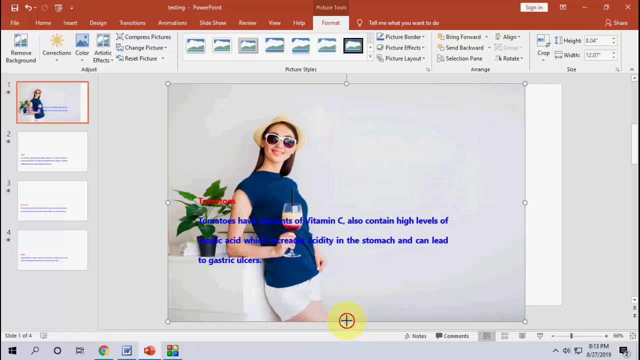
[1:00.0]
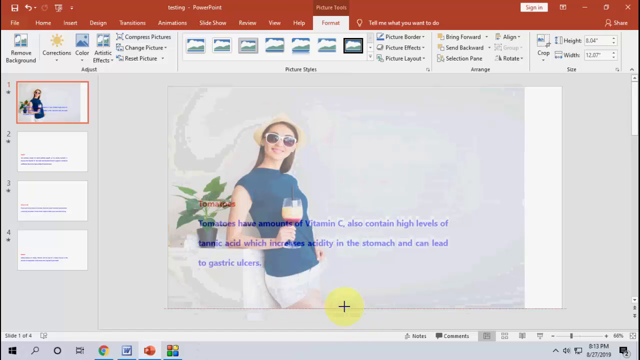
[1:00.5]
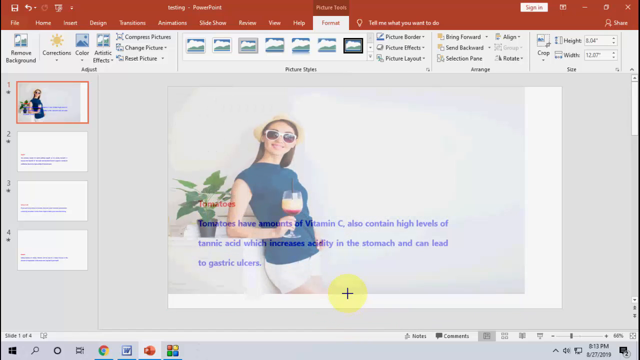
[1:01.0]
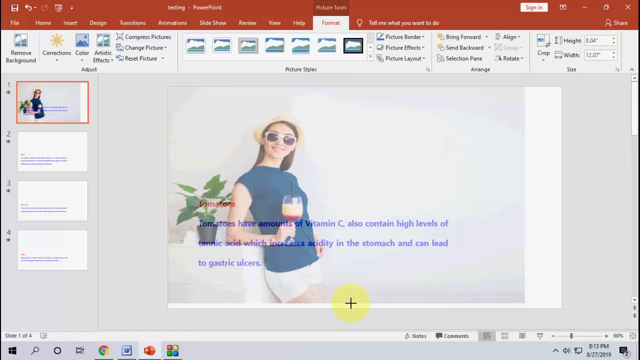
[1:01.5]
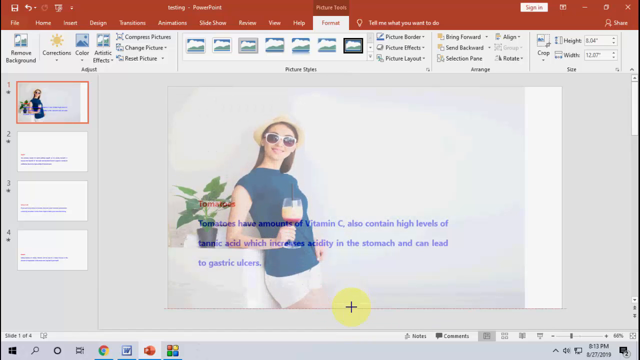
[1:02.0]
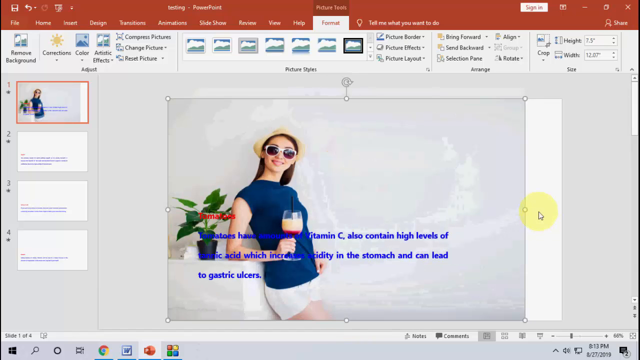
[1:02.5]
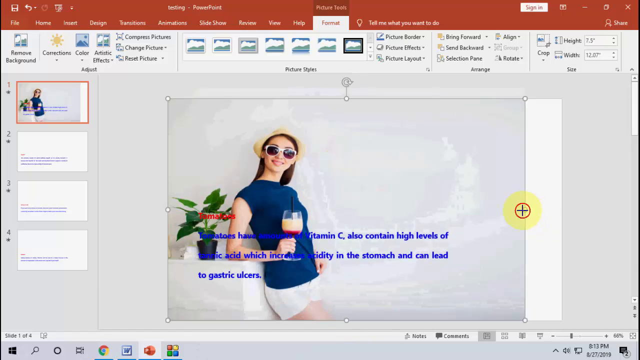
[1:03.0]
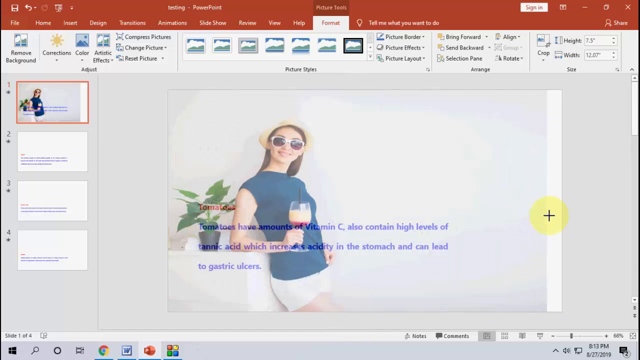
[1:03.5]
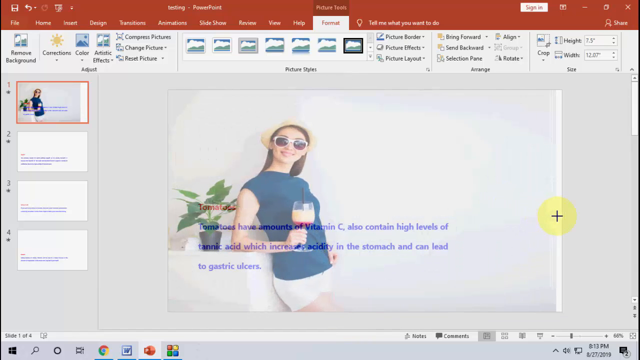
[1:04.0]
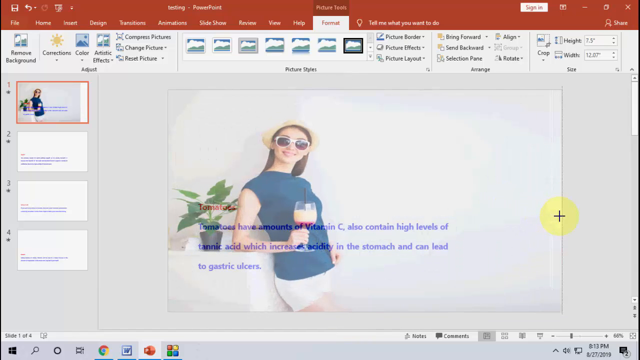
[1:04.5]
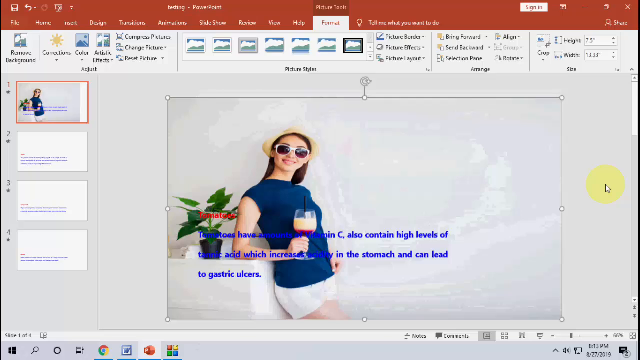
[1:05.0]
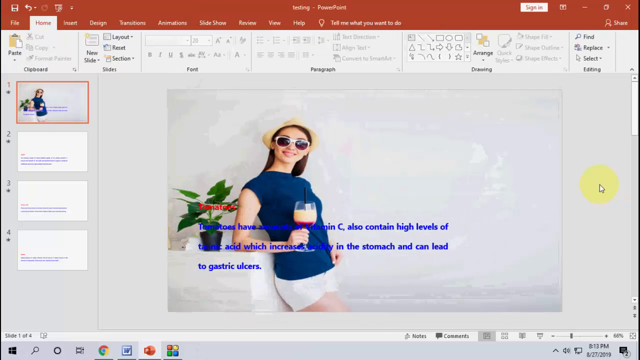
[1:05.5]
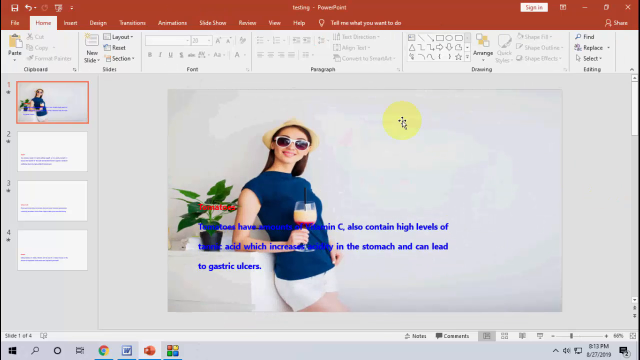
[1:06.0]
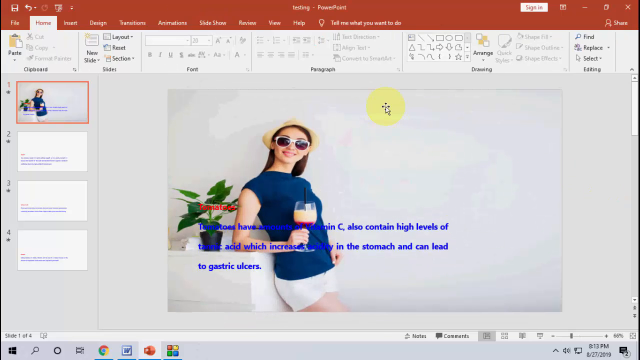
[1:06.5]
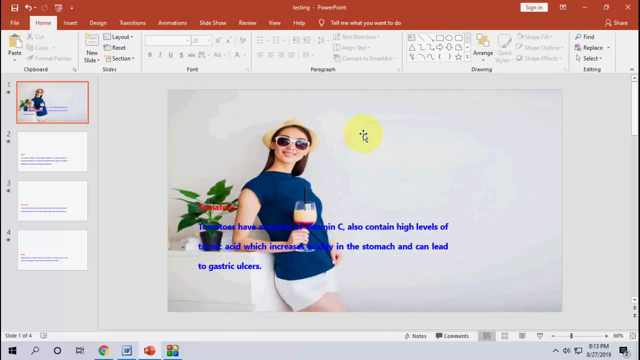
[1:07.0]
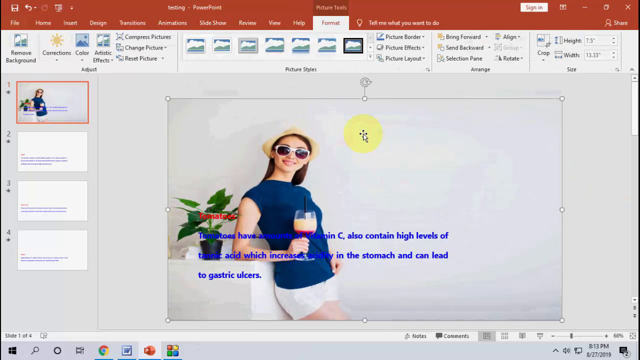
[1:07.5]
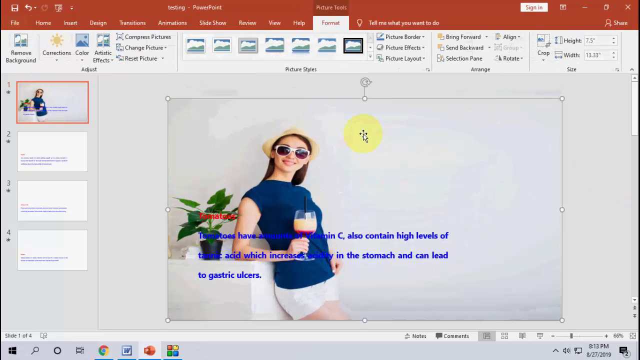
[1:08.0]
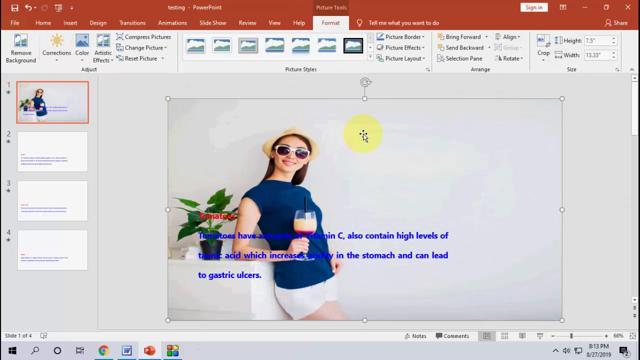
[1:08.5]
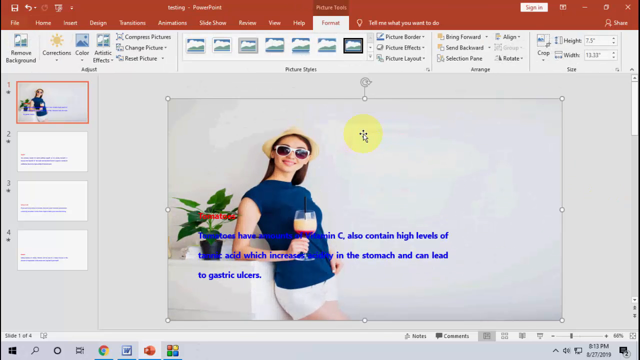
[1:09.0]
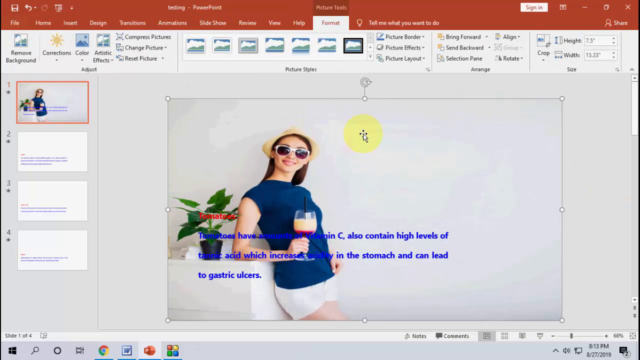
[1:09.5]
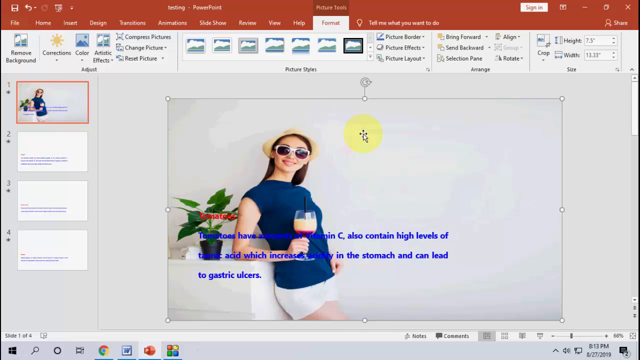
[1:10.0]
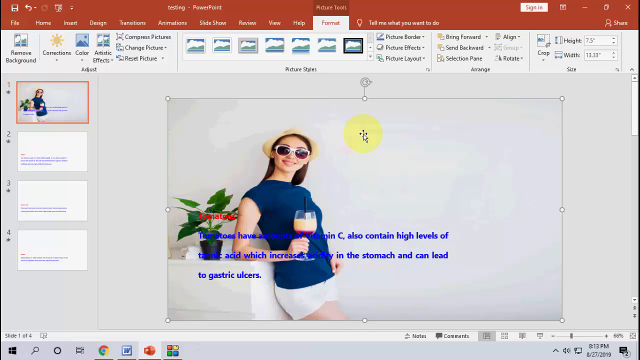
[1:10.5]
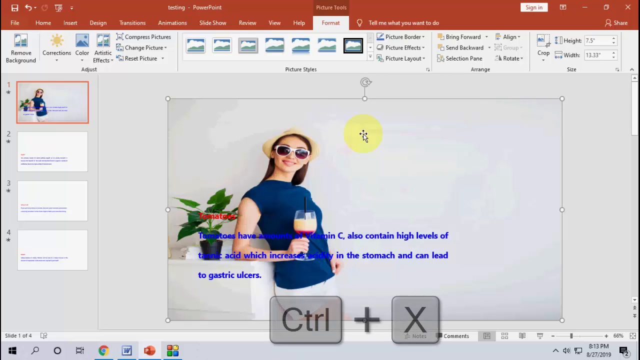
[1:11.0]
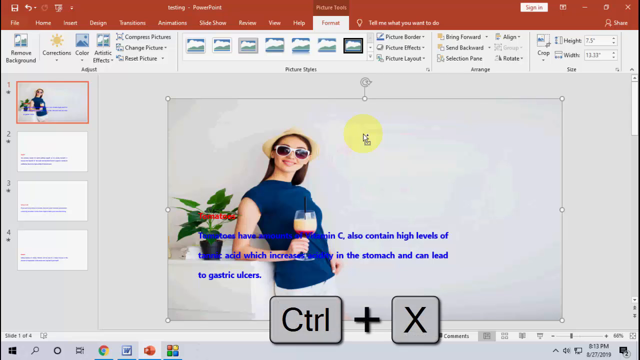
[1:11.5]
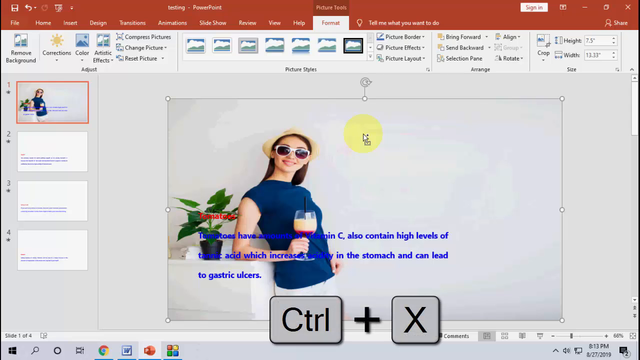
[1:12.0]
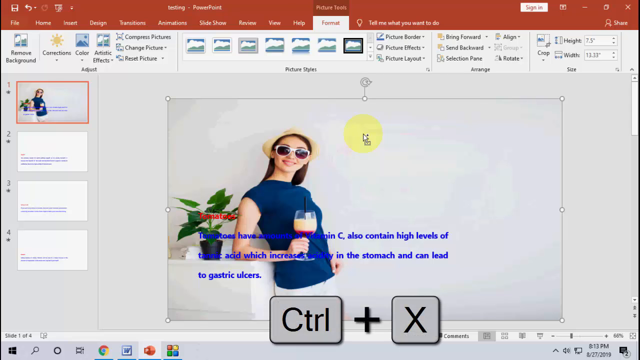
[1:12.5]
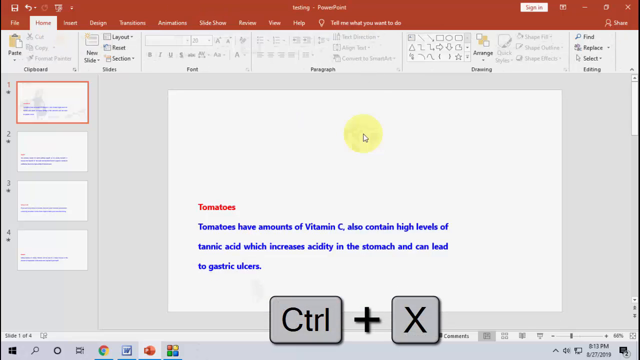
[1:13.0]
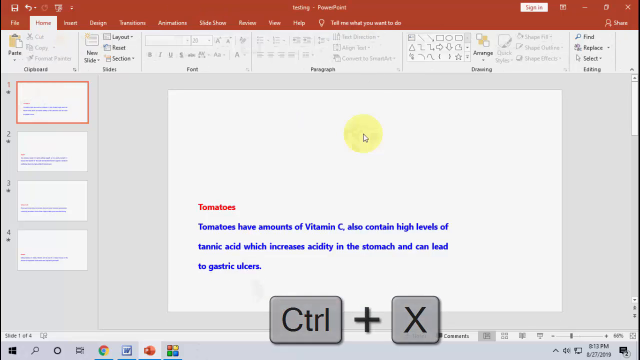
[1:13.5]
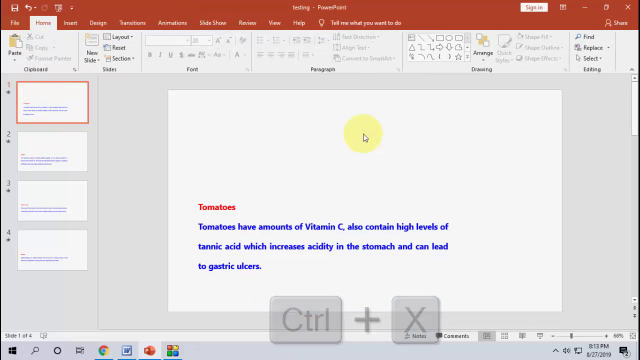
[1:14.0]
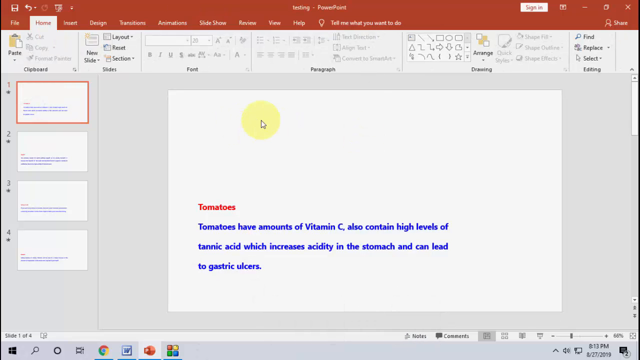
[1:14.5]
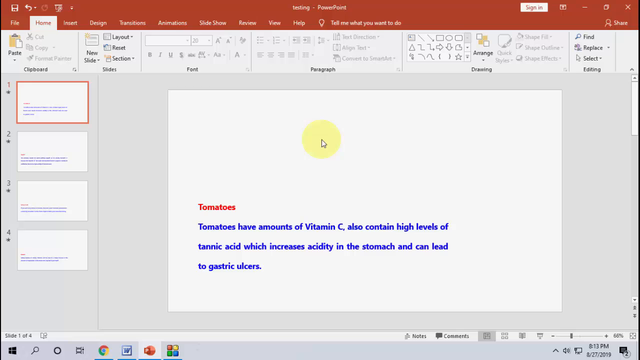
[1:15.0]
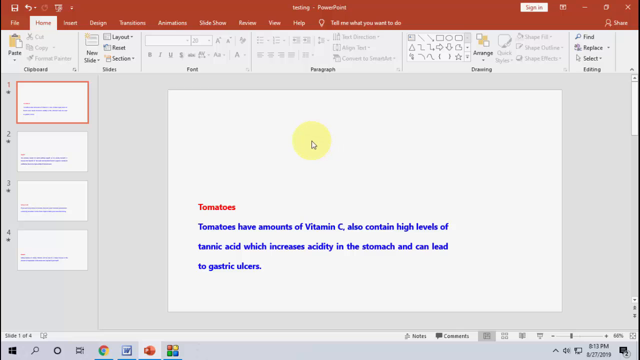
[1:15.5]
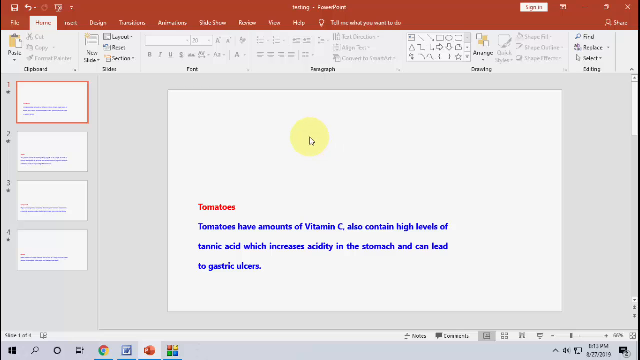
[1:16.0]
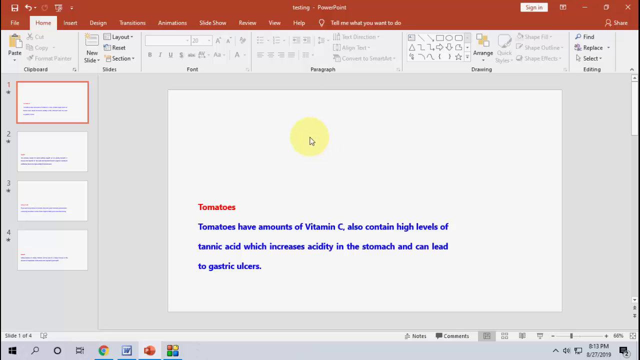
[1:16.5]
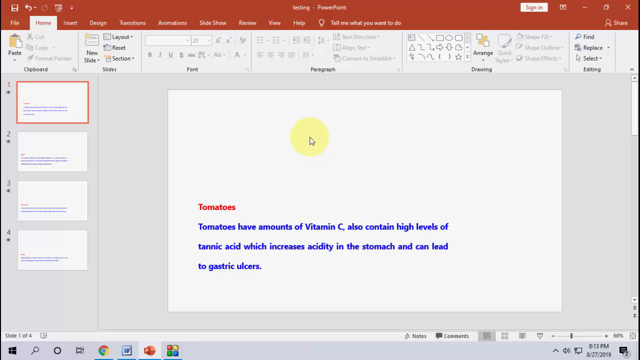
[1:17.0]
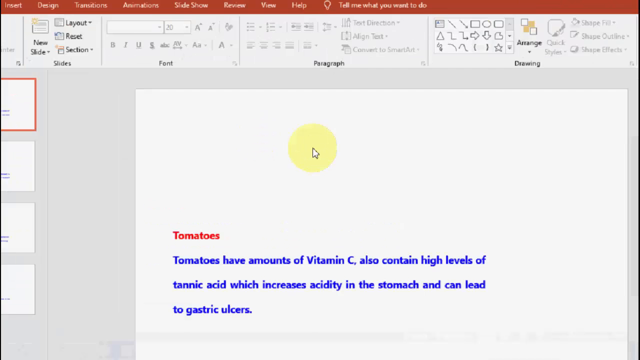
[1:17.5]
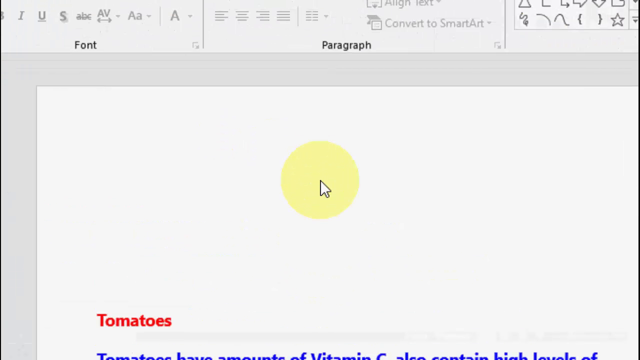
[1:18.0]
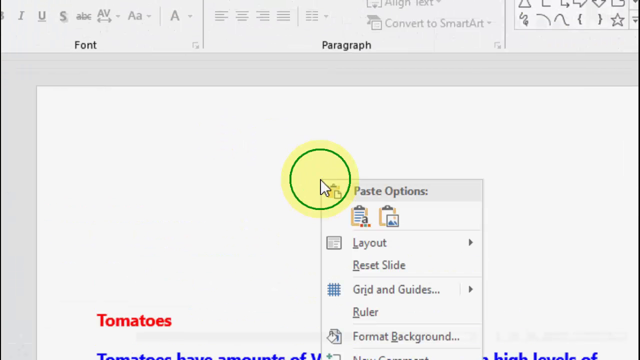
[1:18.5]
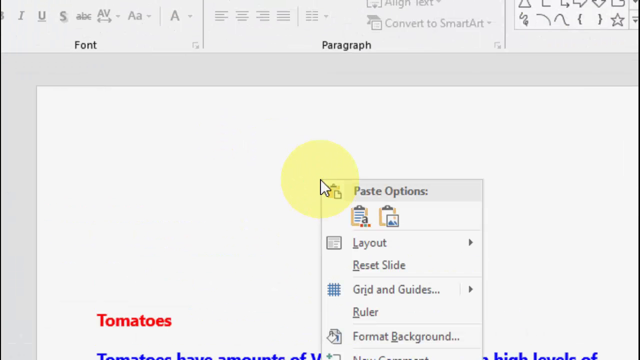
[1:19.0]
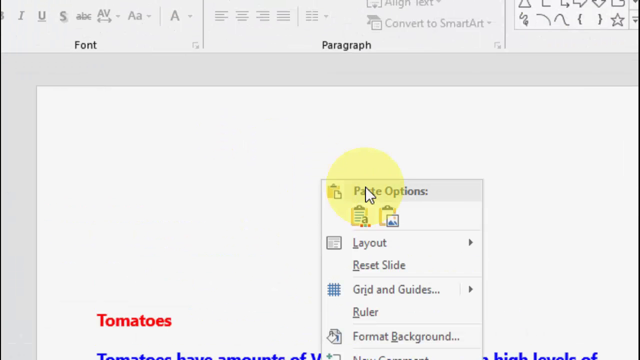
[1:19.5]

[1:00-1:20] A PowerPoint slide is being edited with a picture in the back. The picture becomes kind of transparent, and the cursor moves it, adjusts it and stretches it to the right so it takes up the entire slide. The cursor kind of hovers over the middle, and buttons appear on the screen showing Ctrl plus X. The picture then disappears, leaving just the text and the white background, while the cursor kind of hovers around the screen. The view zooms in and another drop-down box appears. The photo shows a white woman who looks pretty young and is skinny, wearing a sleeveless blue shirt, white shorts, a tan hat and sunglasses. She smiles at the camera, leans back against the white table and holds a wine glass with red wine at the bottom. On the left side of the screen there are four slides in total; the other three have text on them but no images. There is a scroll bar on the right, and along the top is a toolbar with options such as Format, Help, View and Slideshow, as well as options like remove background, color, effects and change picture.